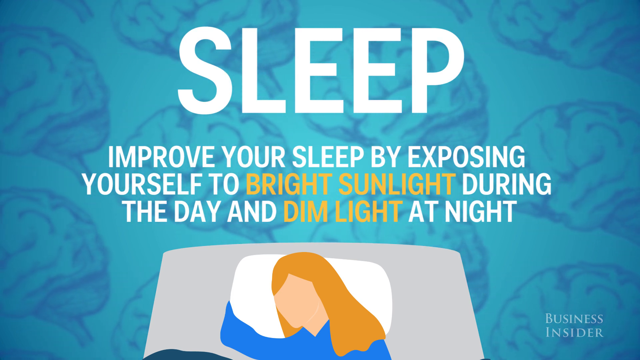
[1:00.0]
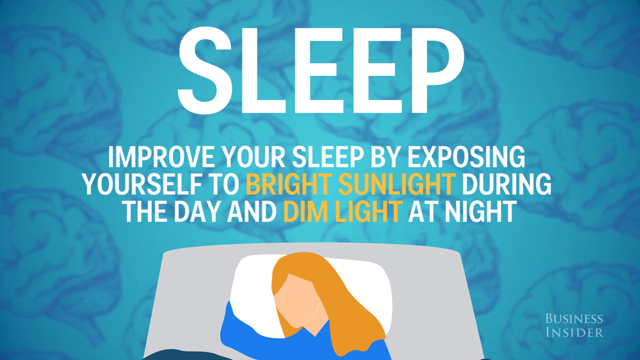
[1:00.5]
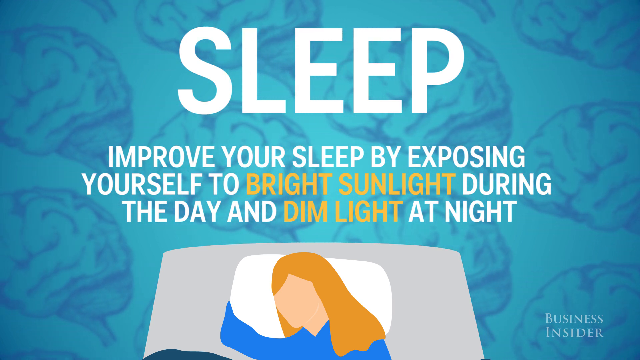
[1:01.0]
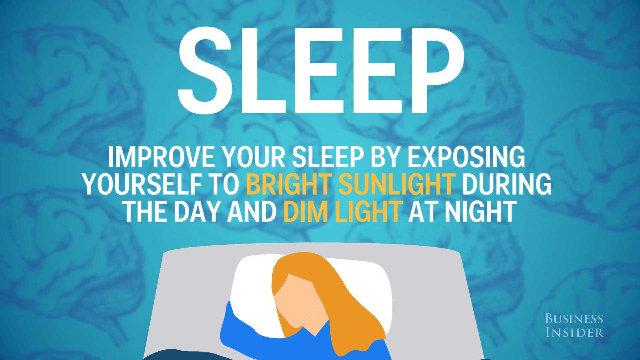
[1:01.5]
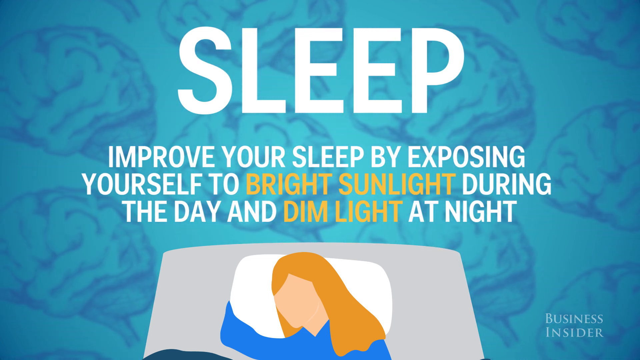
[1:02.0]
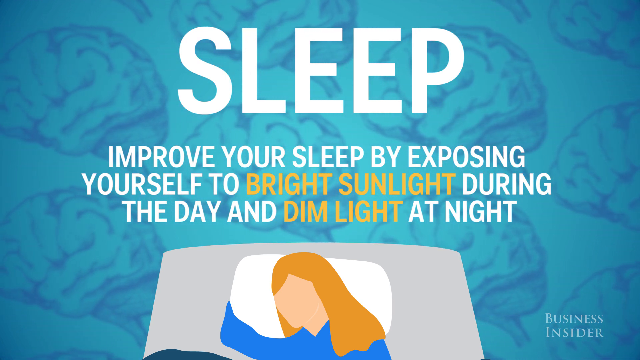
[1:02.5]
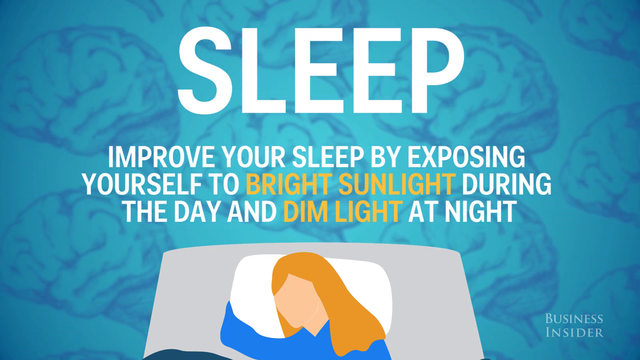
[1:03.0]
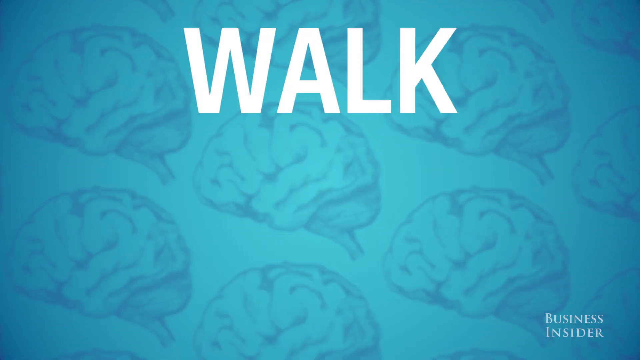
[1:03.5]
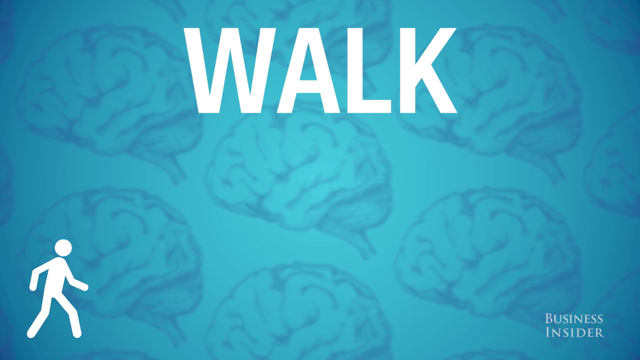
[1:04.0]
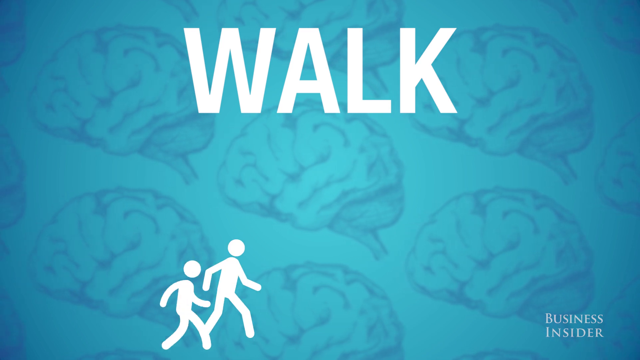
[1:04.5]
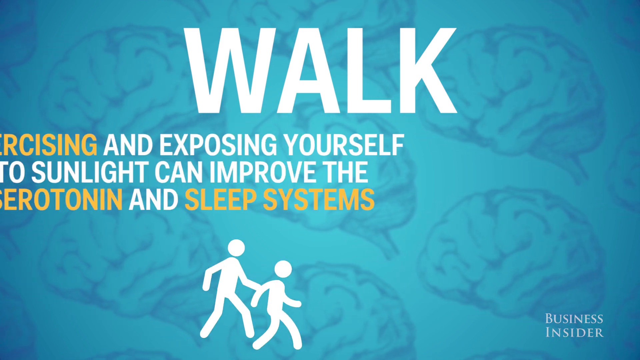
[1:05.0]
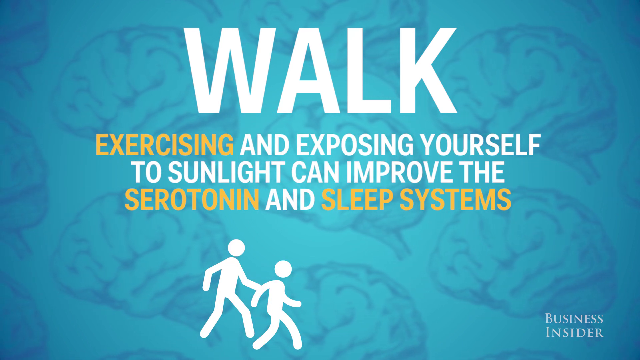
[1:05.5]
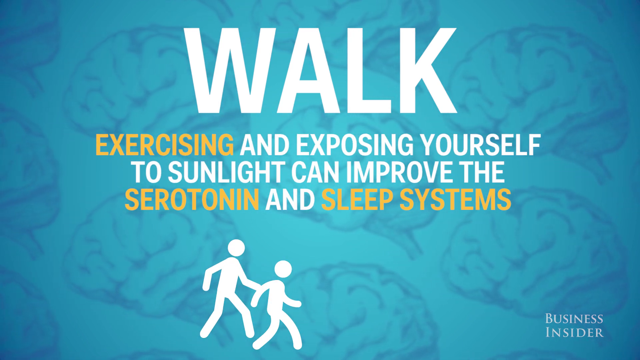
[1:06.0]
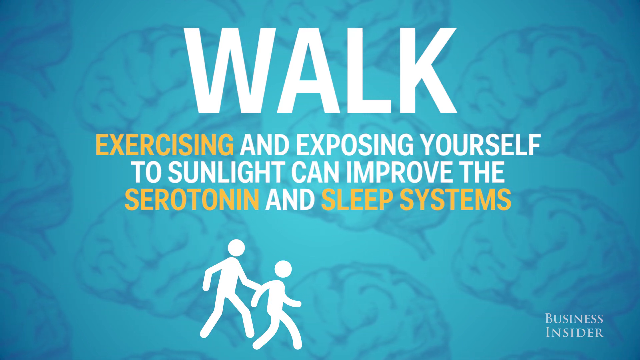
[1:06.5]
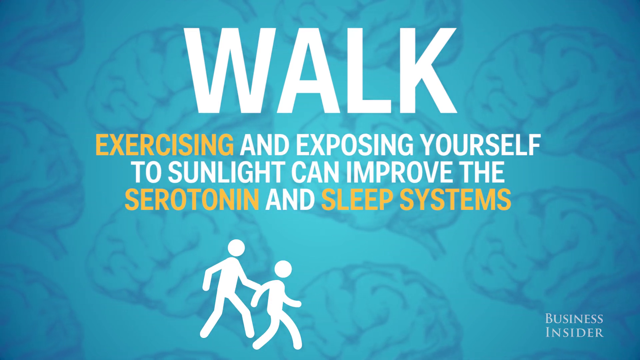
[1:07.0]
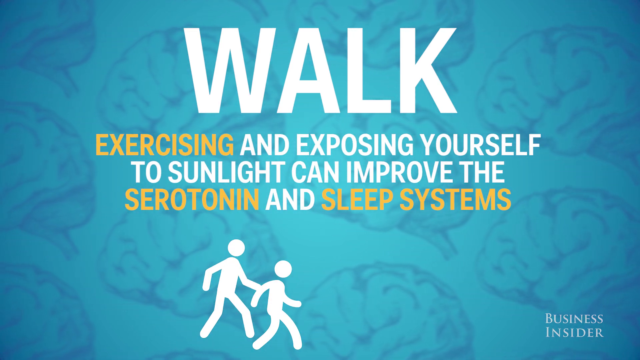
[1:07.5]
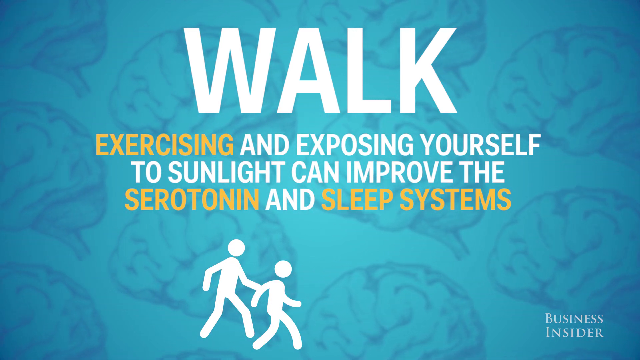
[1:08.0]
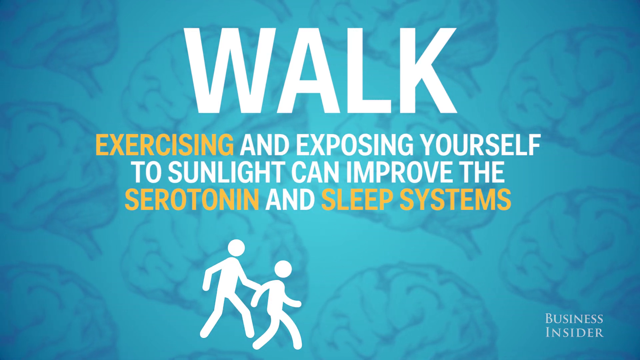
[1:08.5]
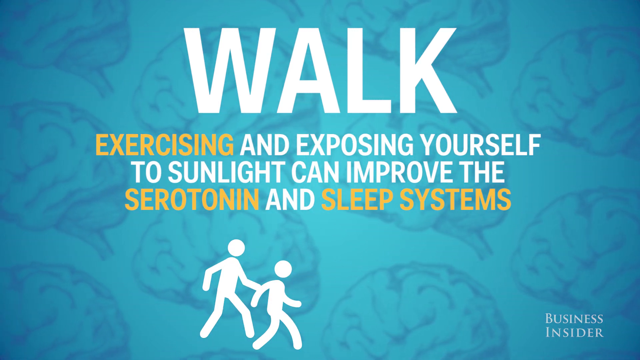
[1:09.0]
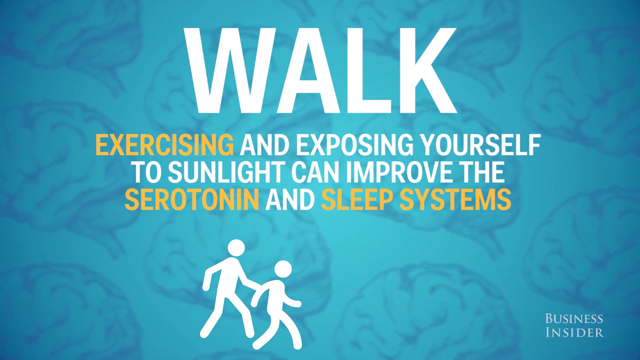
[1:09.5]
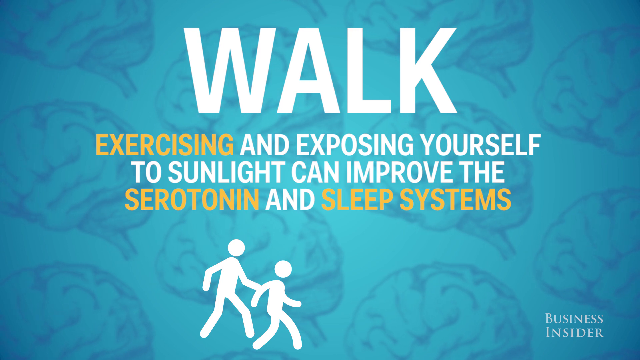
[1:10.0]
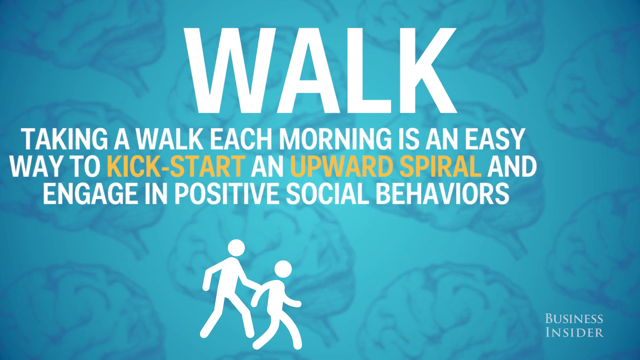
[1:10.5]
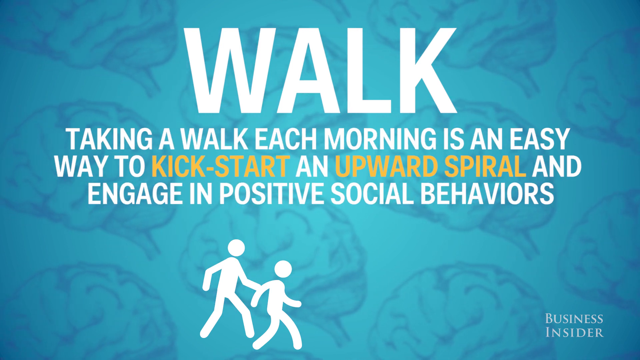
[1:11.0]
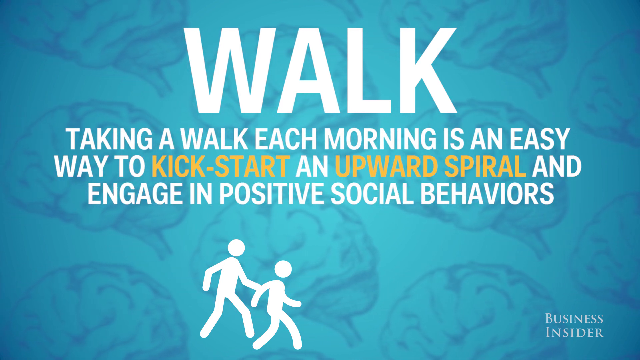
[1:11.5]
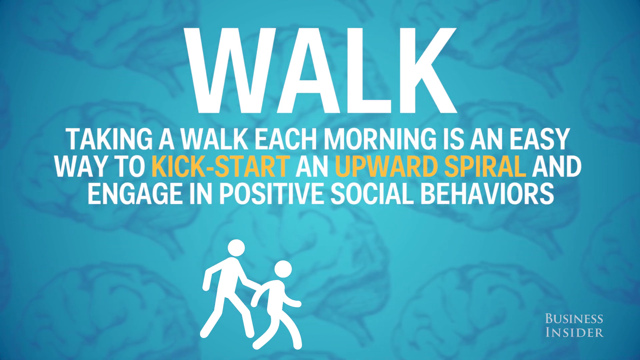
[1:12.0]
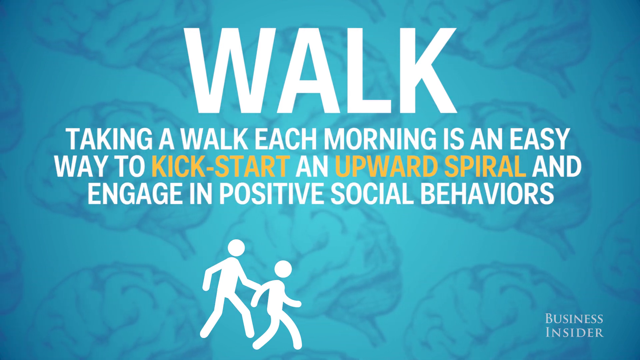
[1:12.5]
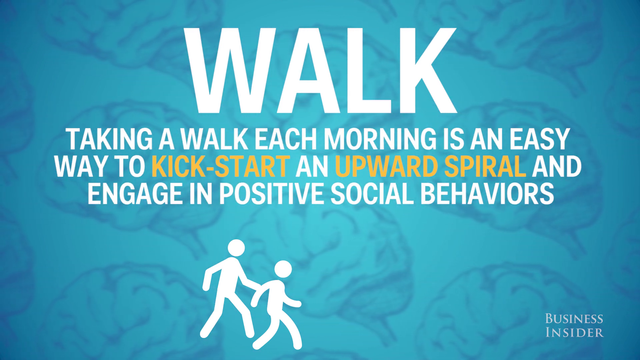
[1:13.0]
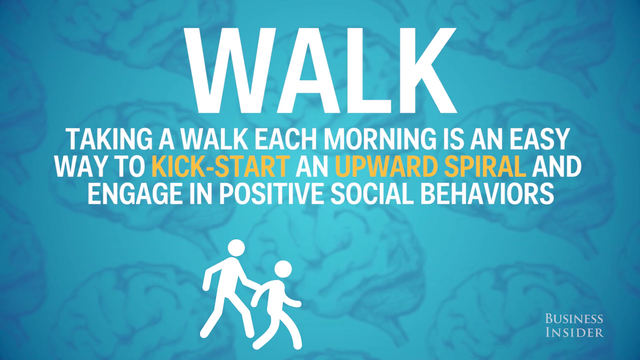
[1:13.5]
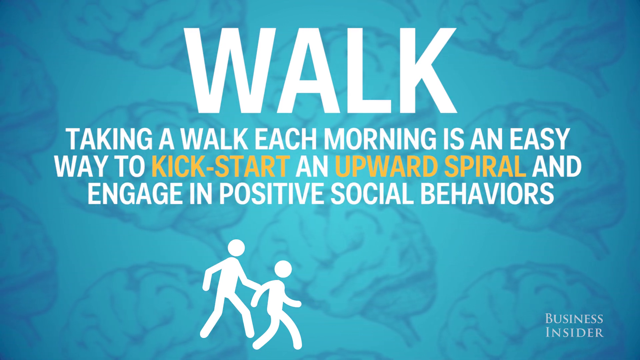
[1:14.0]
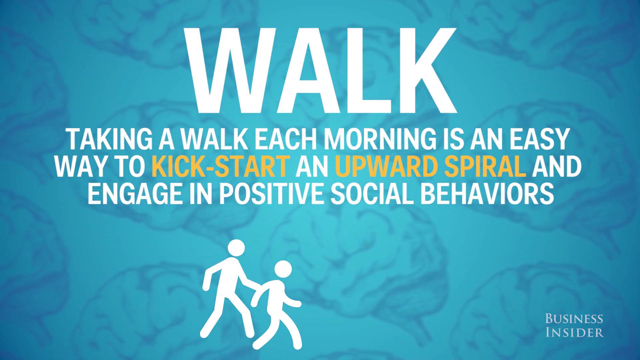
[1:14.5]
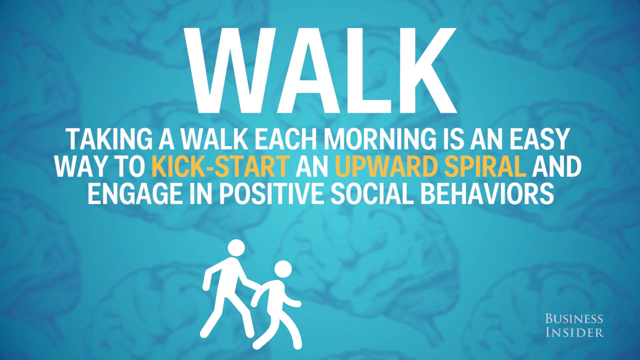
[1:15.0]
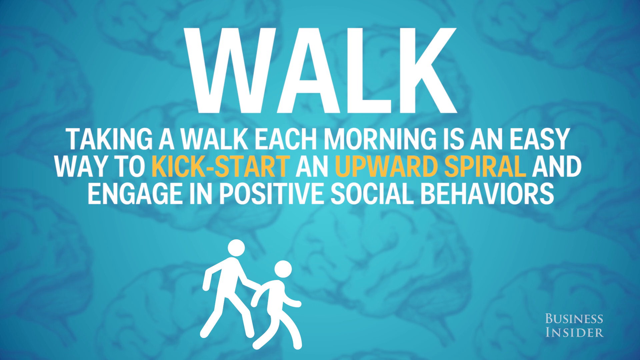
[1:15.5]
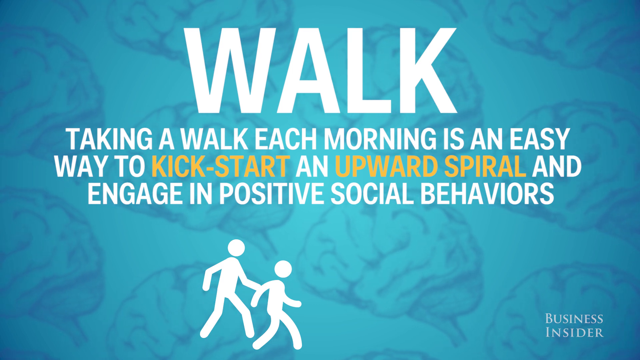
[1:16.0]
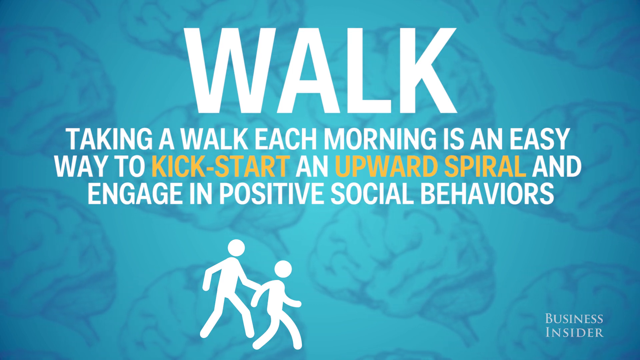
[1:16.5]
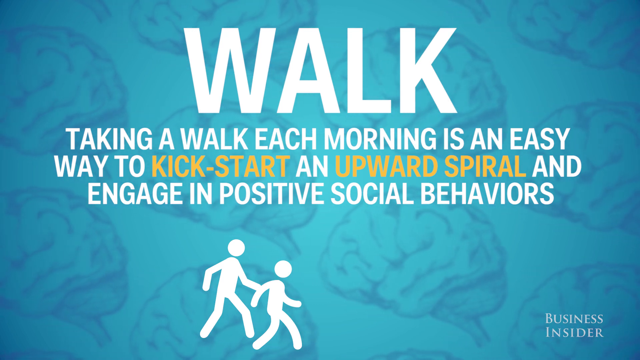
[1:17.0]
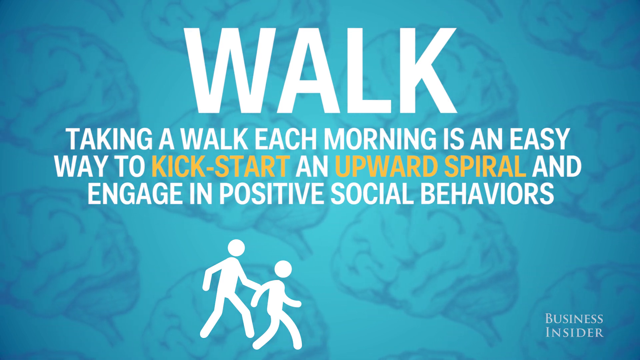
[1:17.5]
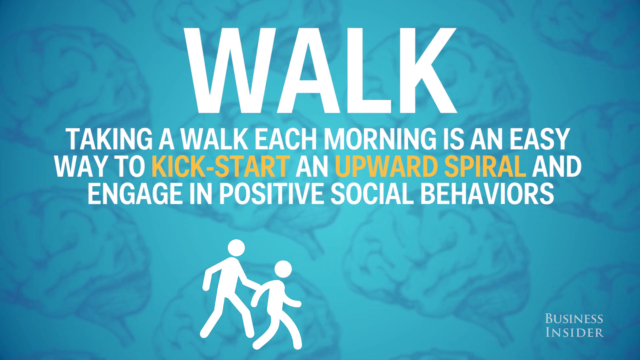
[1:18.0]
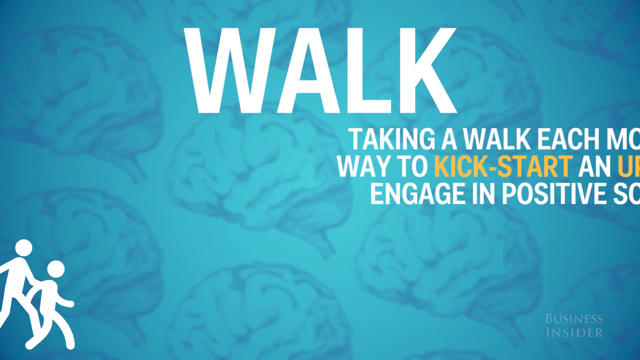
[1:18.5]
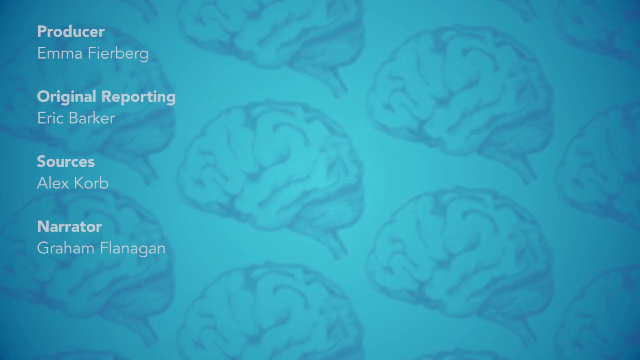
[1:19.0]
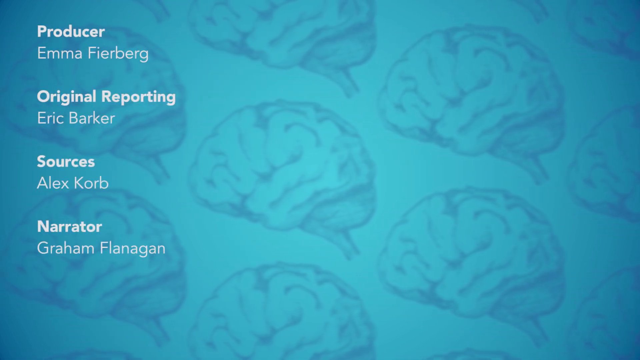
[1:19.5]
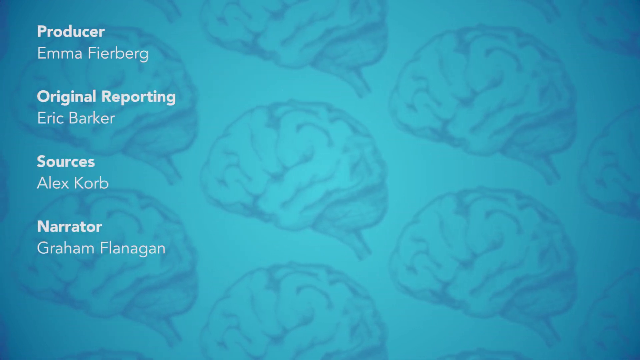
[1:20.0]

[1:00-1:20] The text about sleep is still on screen, and then "WALK" appears in white capital letters over the blue background with brains. Small white icons of unrealistic people walking appear. Text reads "exercising and exposing yourself to sunlight can improve the serotonin and sleep systems", with "exercising", "serotonin" and "sleep systems" in yellow. Then it reads "taking a walk each morning is an easy way to kickstart an upward spiral and engage in positive social behaviors", with "kickstart" and "upward spiral" in yellow. A credits screen appears, with the credits written vertically on the left side of the screen; job descriptions are in bold letters, while the names of the people performing those jobs are not. The blue background with brains is still there.